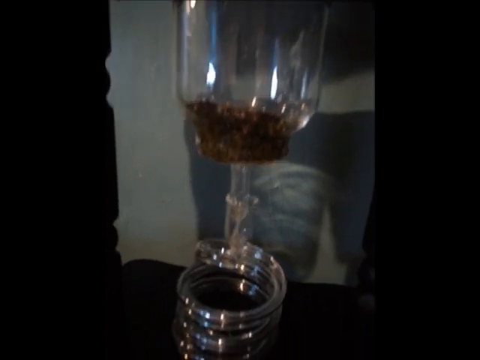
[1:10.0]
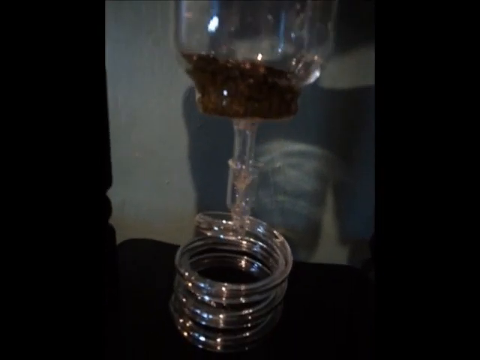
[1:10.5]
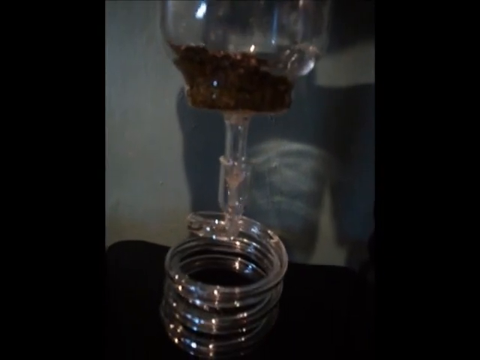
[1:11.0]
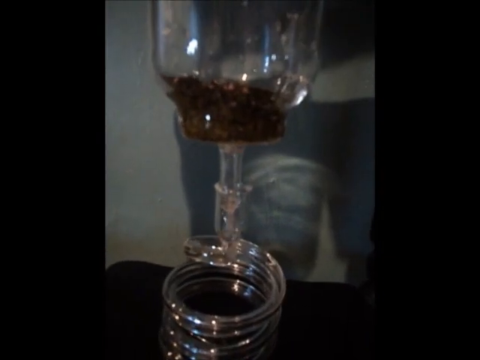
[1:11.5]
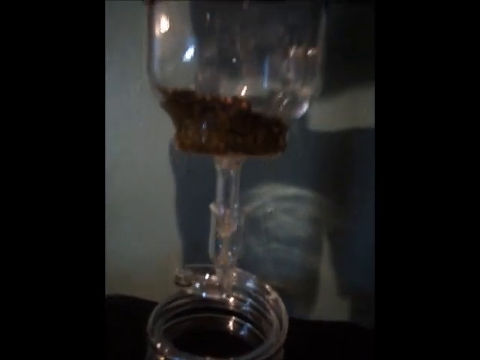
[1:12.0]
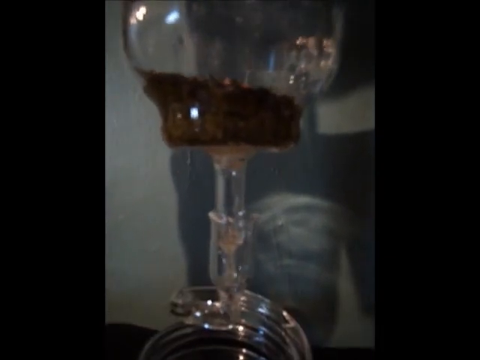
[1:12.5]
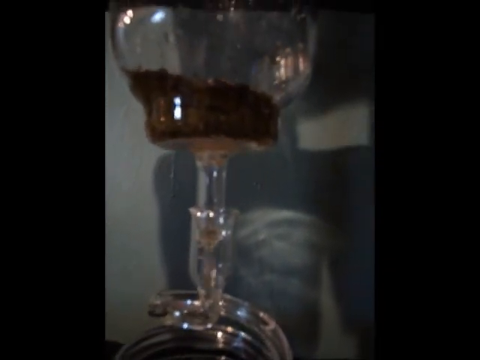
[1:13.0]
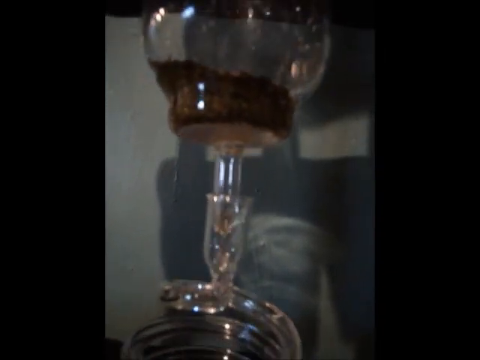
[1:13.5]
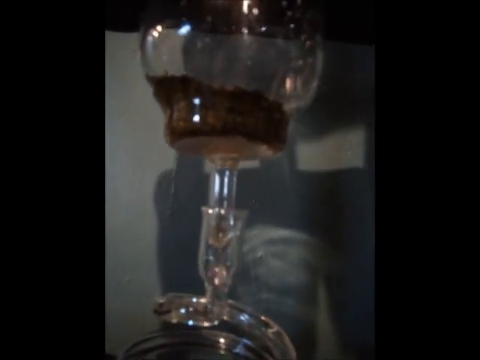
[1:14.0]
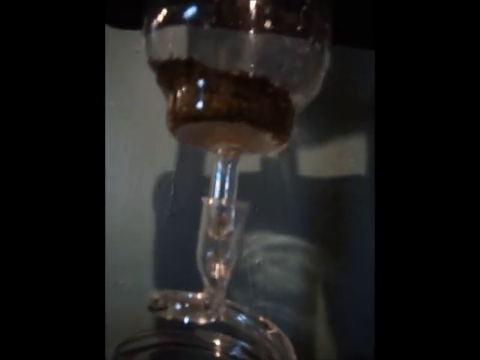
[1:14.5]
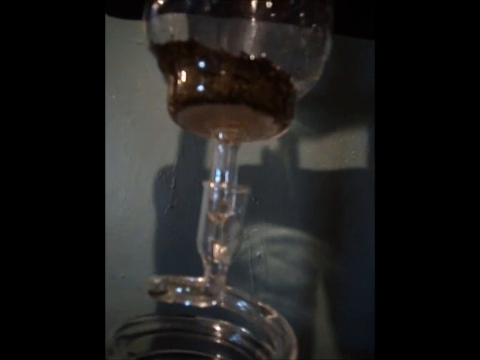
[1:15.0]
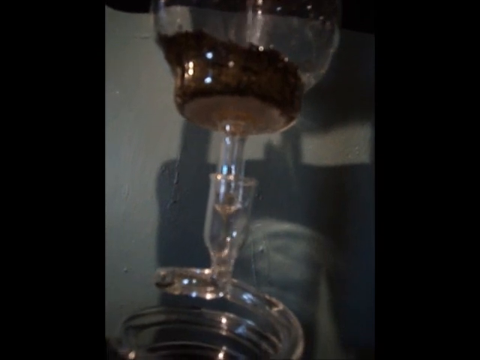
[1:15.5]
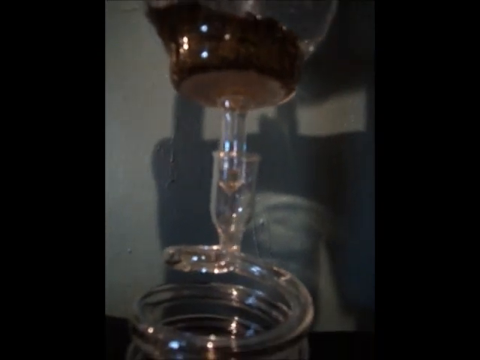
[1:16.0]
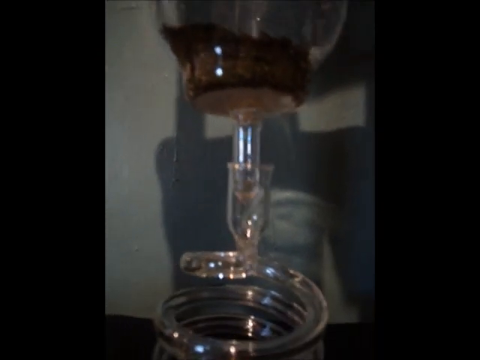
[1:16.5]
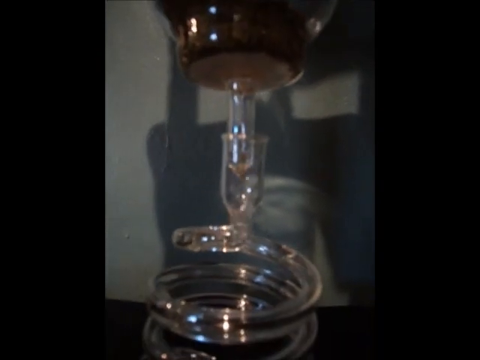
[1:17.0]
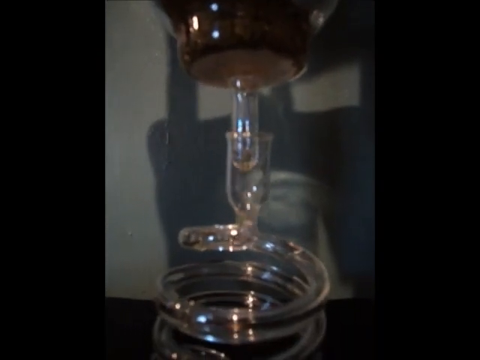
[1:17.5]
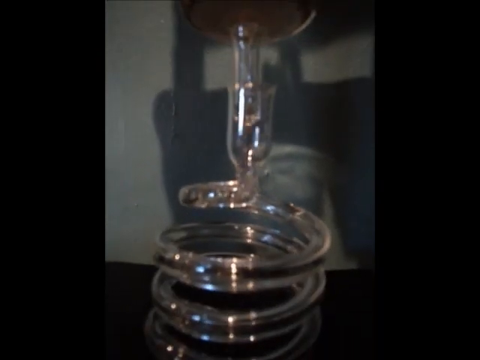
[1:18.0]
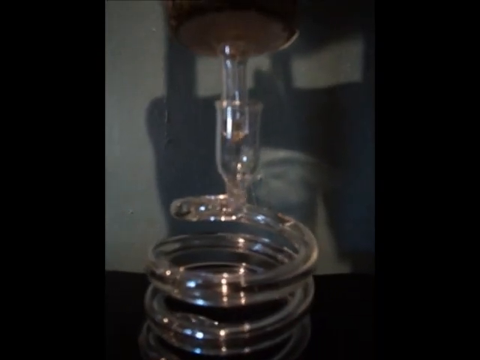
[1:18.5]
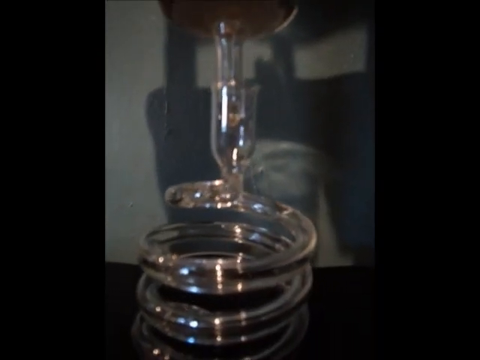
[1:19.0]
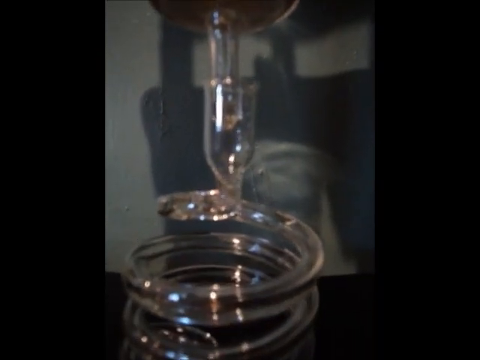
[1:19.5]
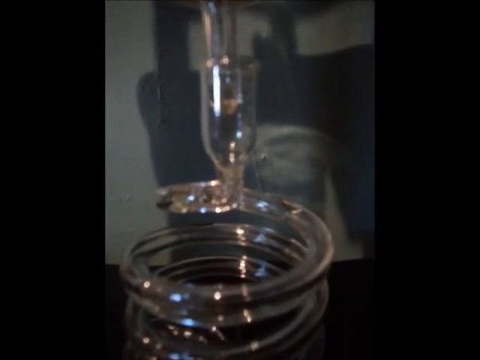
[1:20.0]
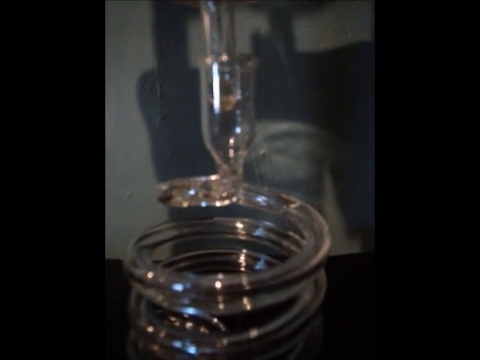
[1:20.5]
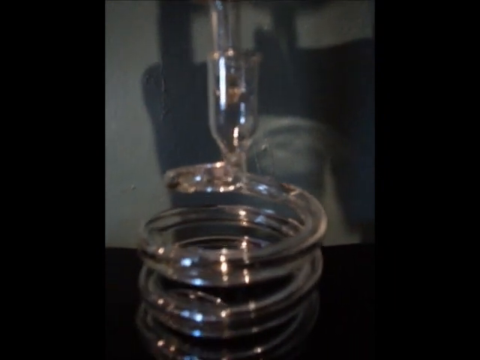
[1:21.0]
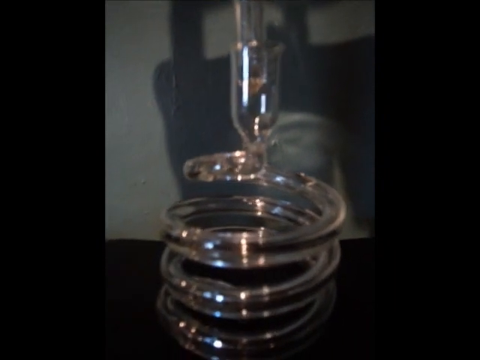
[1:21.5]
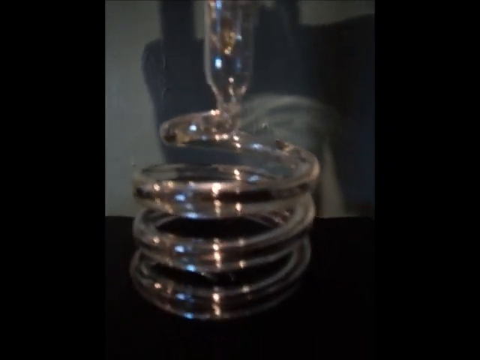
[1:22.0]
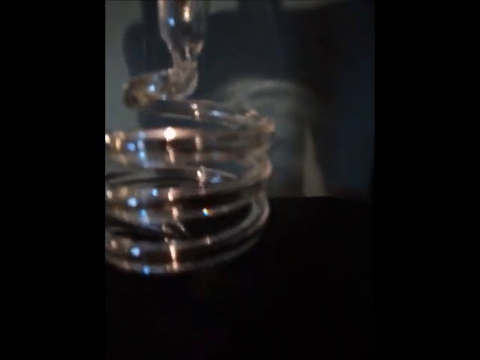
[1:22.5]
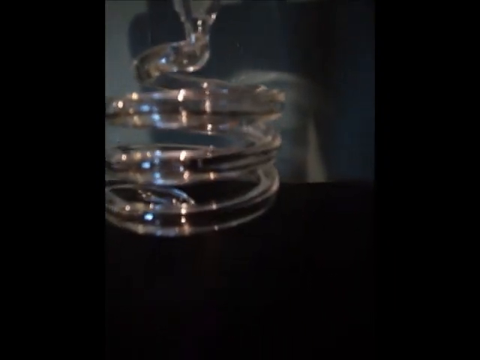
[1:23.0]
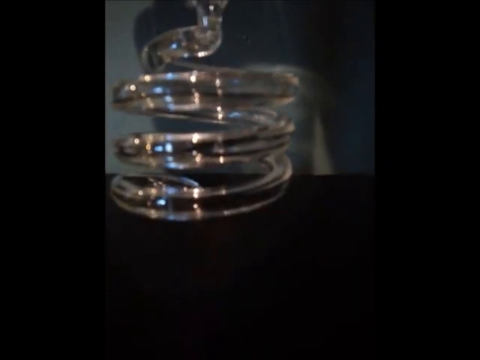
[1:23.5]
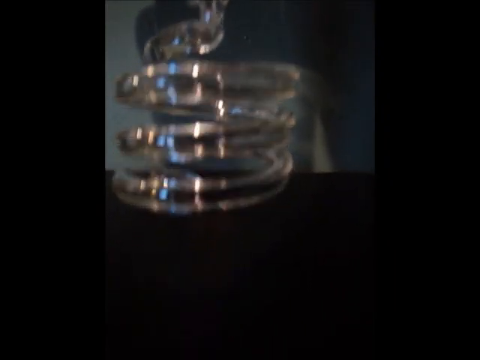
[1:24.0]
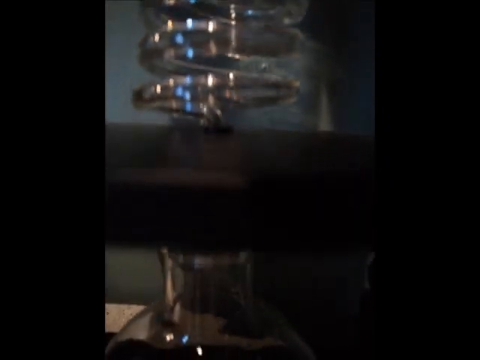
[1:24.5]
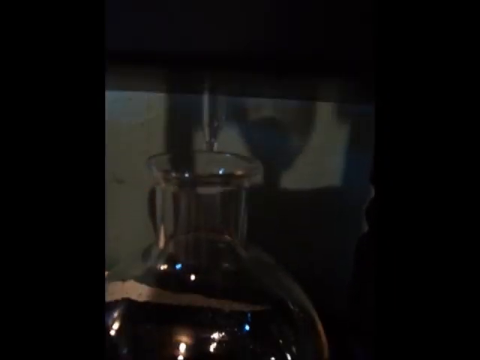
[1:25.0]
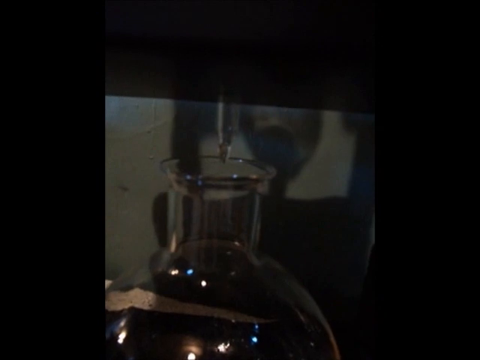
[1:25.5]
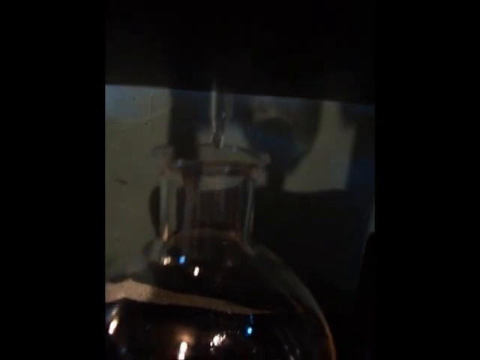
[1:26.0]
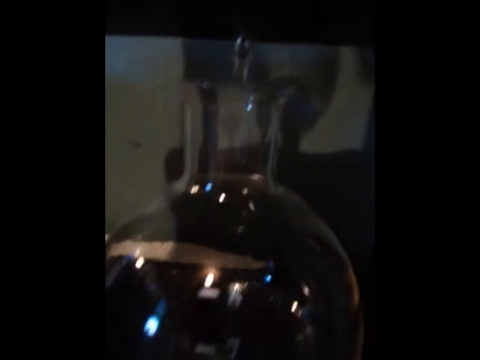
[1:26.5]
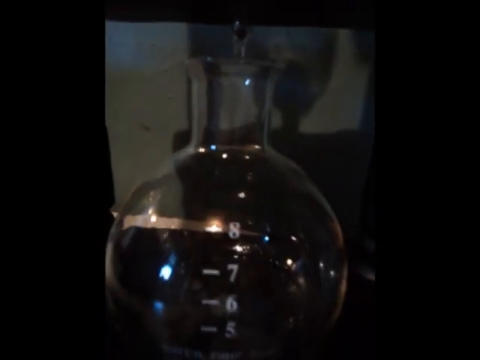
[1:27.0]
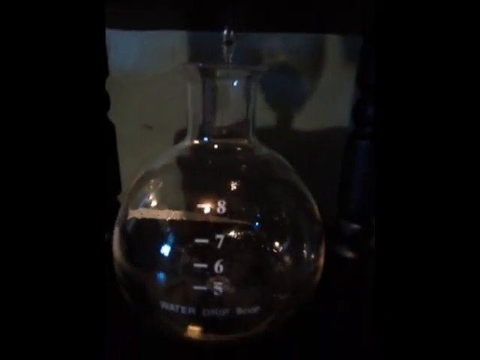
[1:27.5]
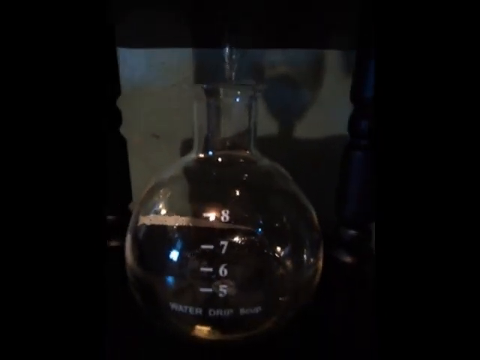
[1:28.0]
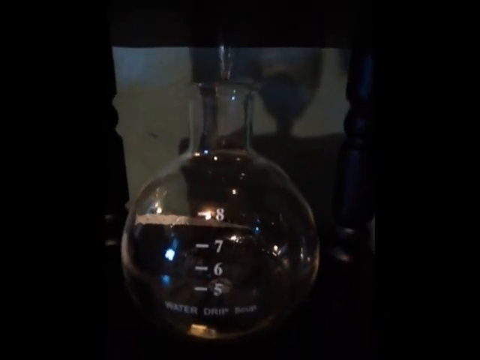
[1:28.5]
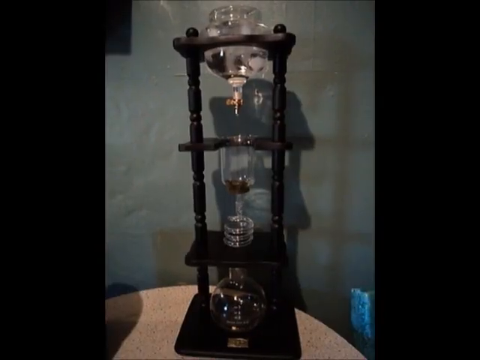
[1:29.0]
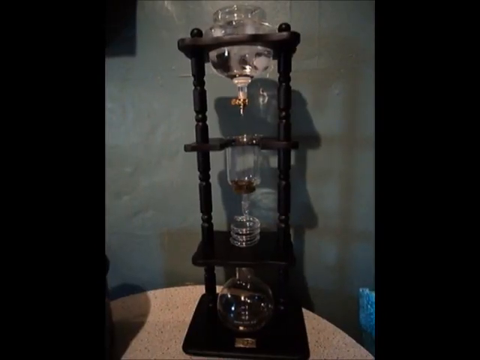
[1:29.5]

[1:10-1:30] The shot starts close up on the portion holding the tea leaves. The leaves fill just the bottom, maybe about two inches, and are dark colored. Below that, a tube goes down about three inches to the circular glass tubing, which goes around in a spiral about three or four times. Water drips down onto the tea, and underneath, the tea drips out the bottom into the spiral portion, moving through it very slowly, barely at all. The camera goes down to the spiral portion and then below that shelf to the big, container-like glass jug. A little nozzle underneath drips the tea down into the jug, filling it up. The jug almost looks like a coffee pot but is more rounded and bulbous, and it has numbers on its side counting from the top: 8, 7, 6, 5.